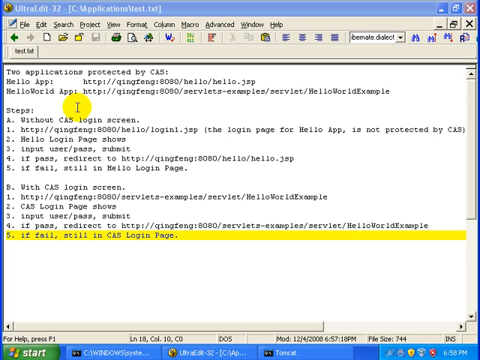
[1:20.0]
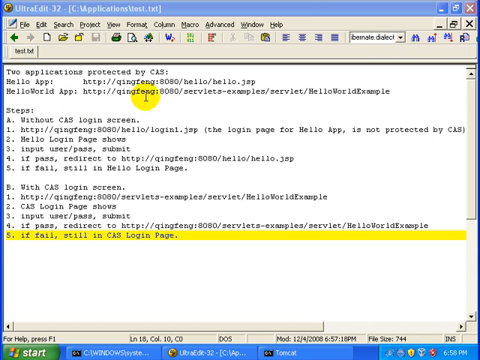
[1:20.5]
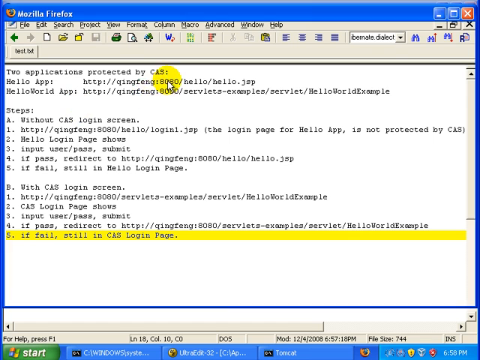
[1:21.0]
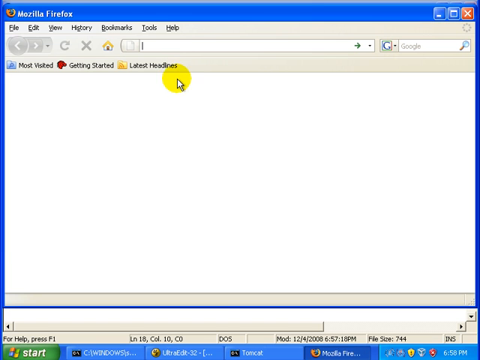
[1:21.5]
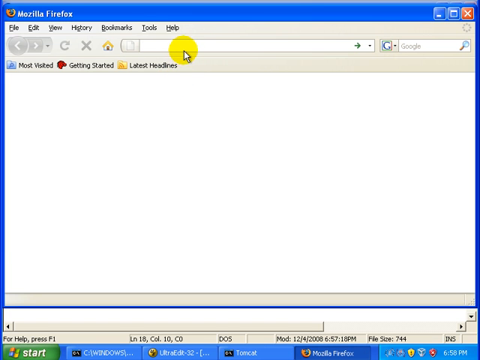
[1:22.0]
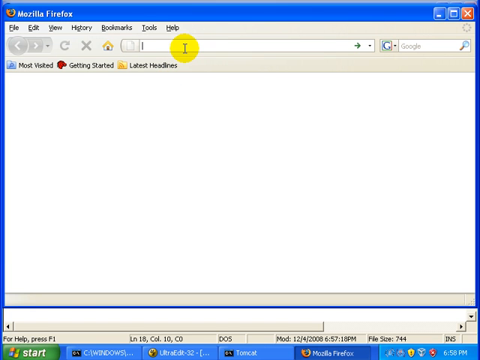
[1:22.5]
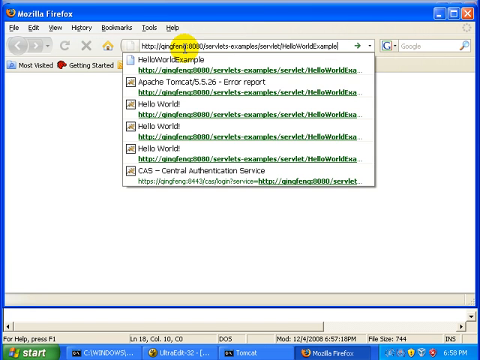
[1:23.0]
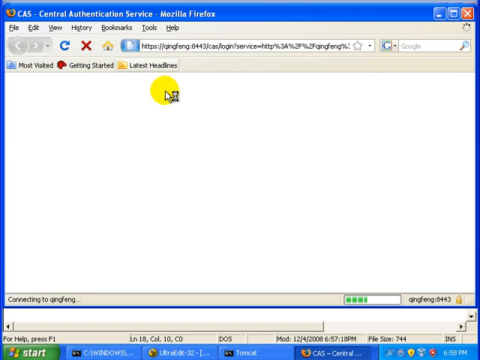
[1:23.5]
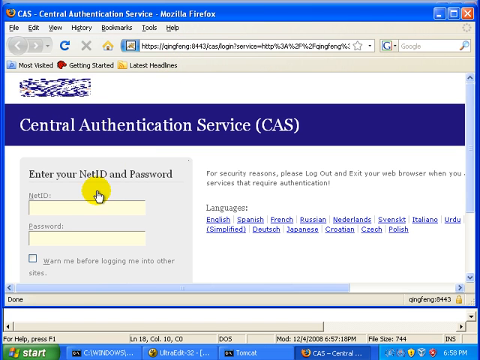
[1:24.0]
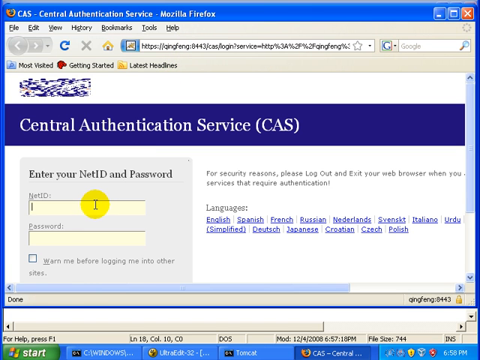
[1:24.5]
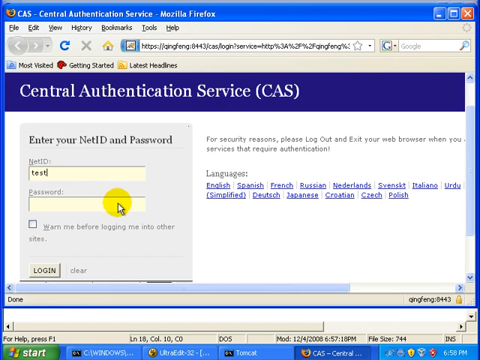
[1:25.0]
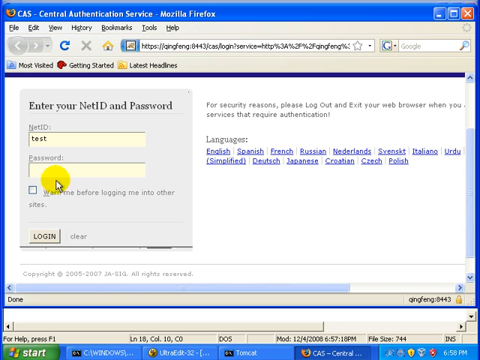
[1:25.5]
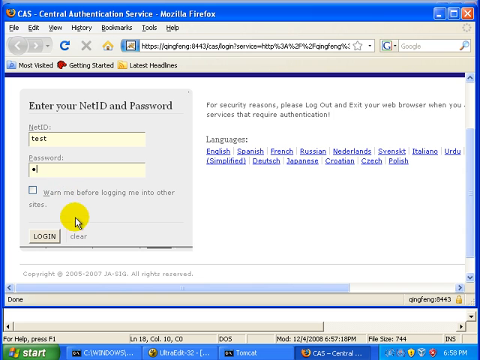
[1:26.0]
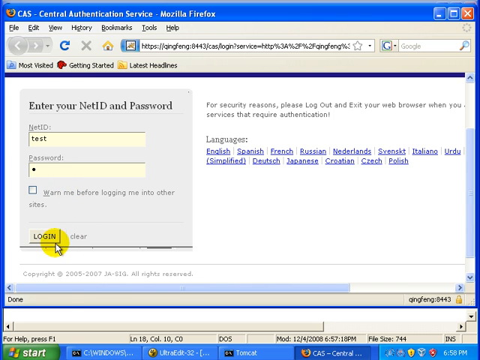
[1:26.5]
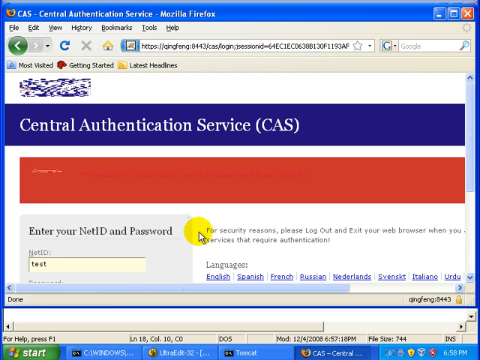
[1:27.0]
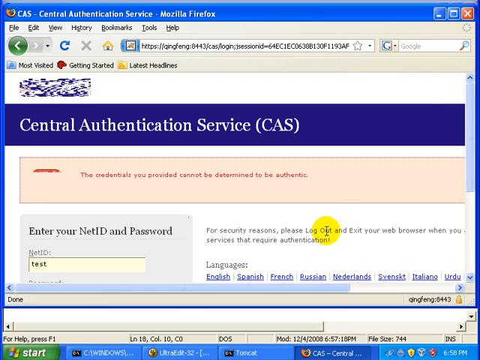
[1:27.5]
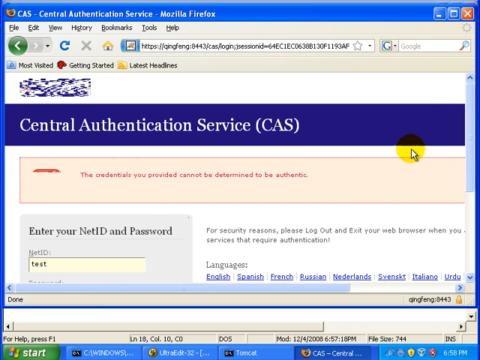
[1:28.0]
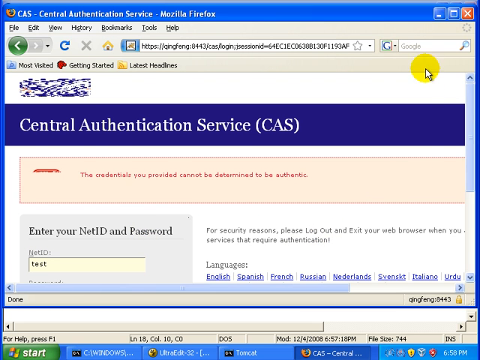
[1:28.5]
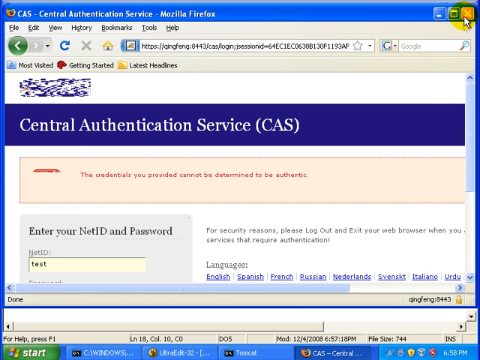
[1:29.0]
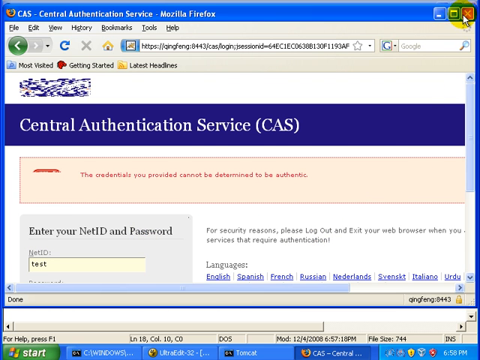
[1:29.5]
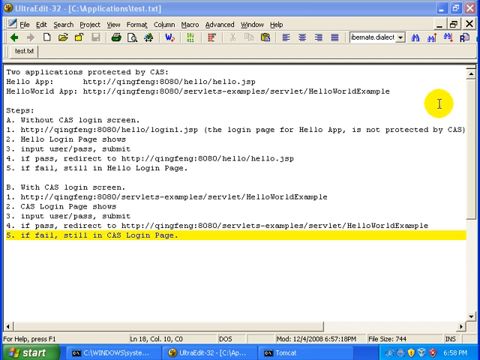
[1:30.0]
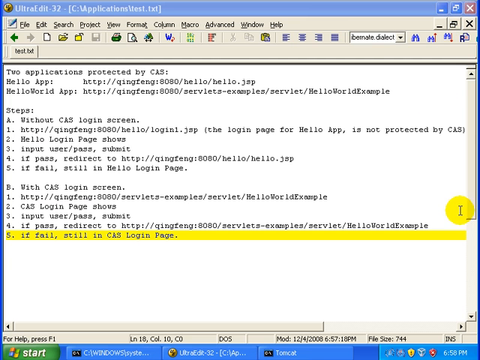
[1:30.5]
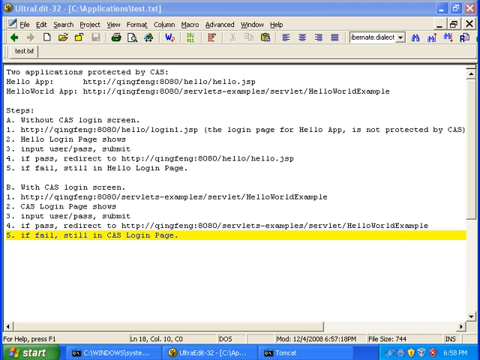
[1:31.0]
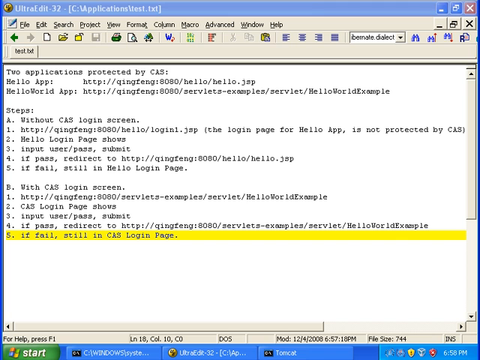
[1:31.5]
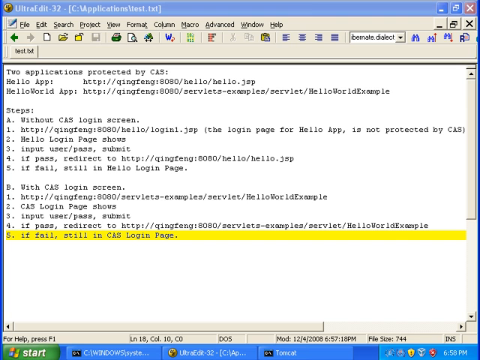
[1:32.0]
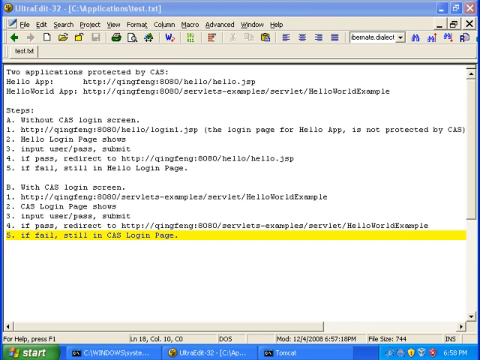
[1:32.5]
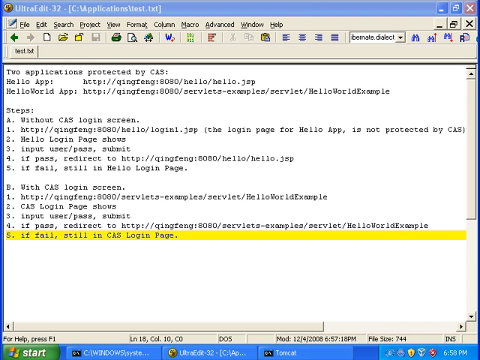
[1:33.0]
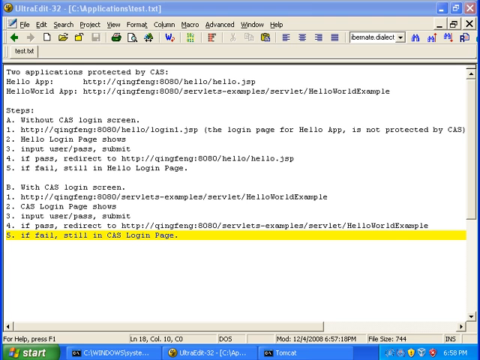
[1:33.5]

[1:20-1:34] The UltraEdit screen shows B5 highlighted while the cursor is at the top of the screen, hovering over the first two lines. Firefox pops back up, the servlets link is pasted into the search bar again, and the Central Authentication Service screen comes up again. "test" is typed into the NetID field and a one-word password is entered. A big red bar appears at the top center of the website, then changes to a lighter, light tan color, and reads "the credentials you provided cannot be determined to be authentic." The browser is exited and the UltraEdit screen returns, with B5 still highlighted in yellow.